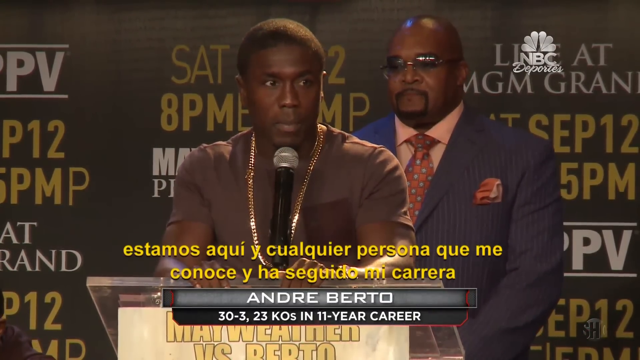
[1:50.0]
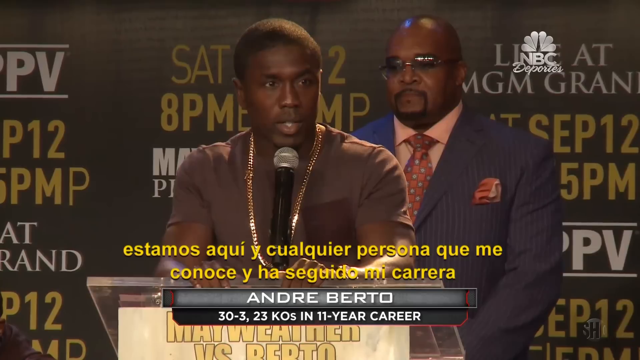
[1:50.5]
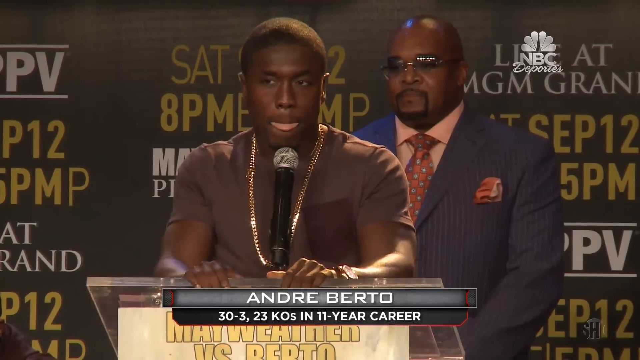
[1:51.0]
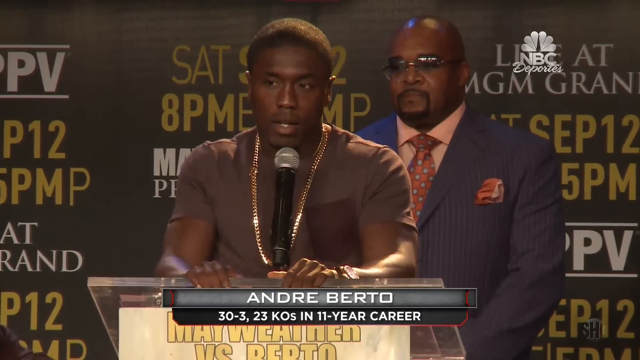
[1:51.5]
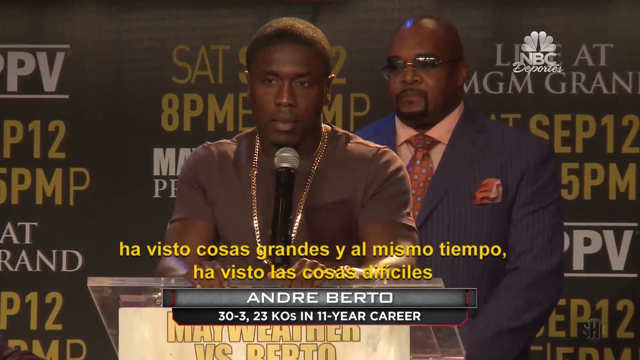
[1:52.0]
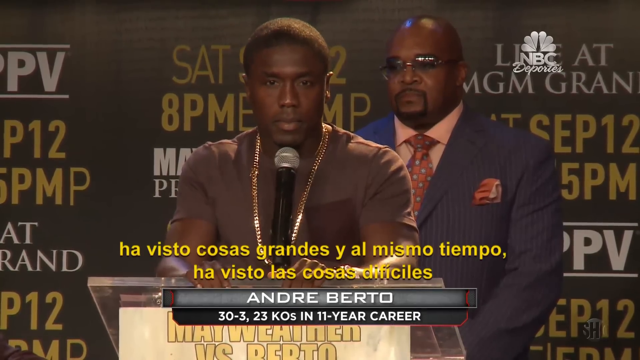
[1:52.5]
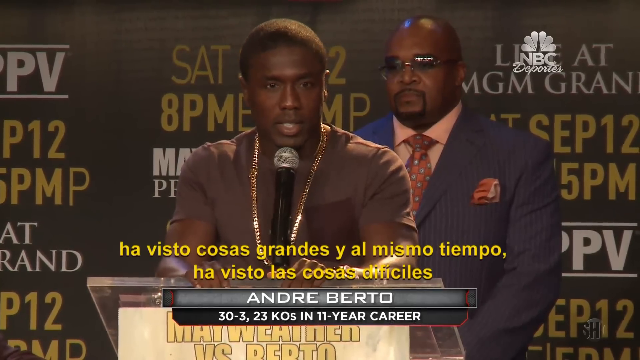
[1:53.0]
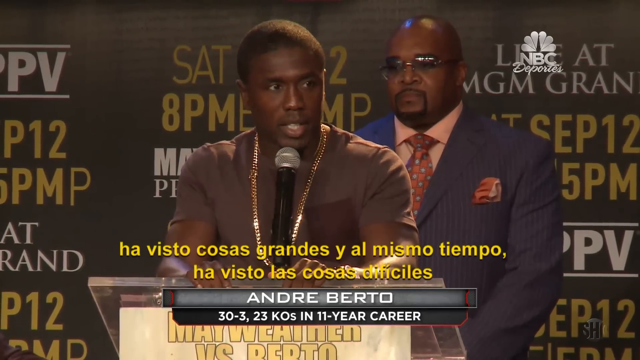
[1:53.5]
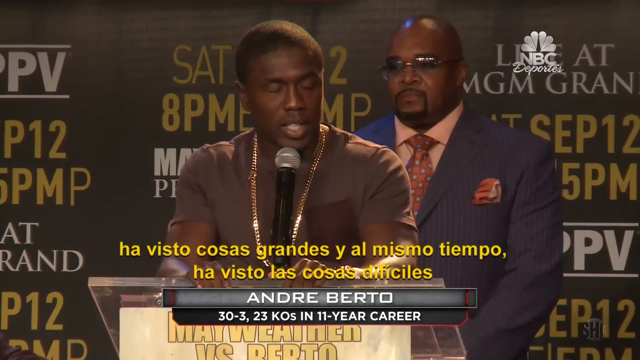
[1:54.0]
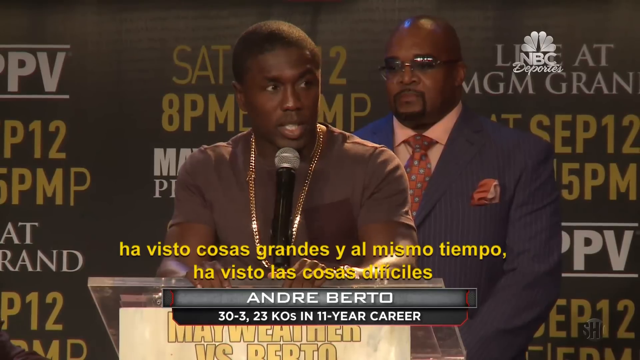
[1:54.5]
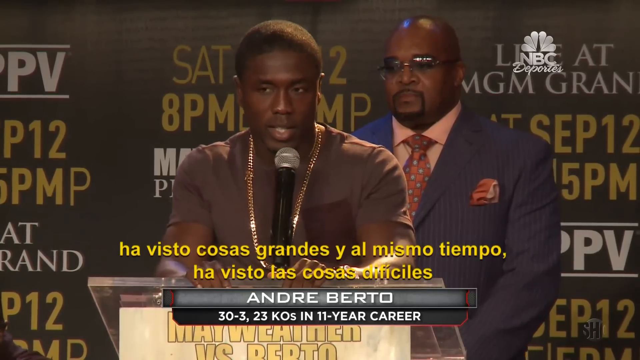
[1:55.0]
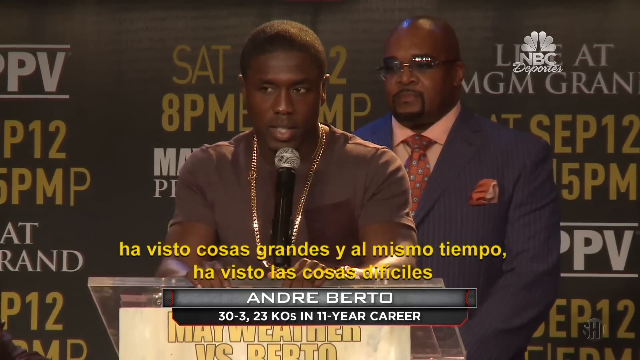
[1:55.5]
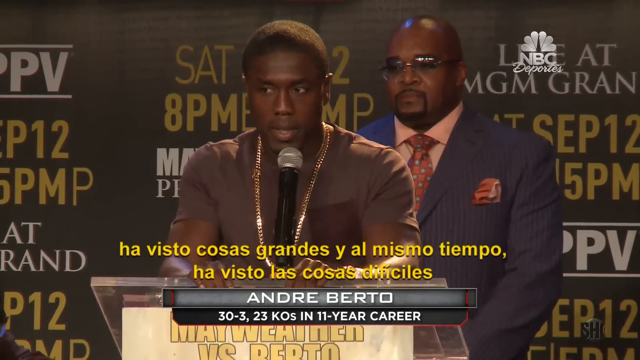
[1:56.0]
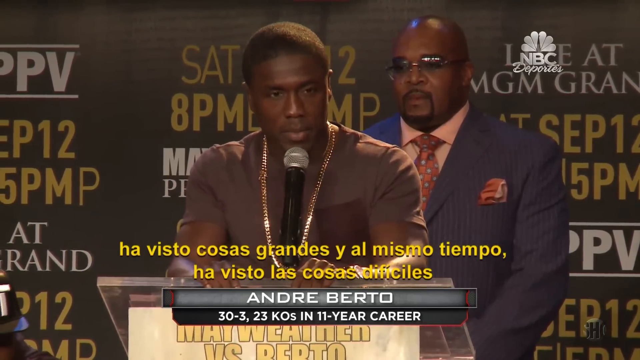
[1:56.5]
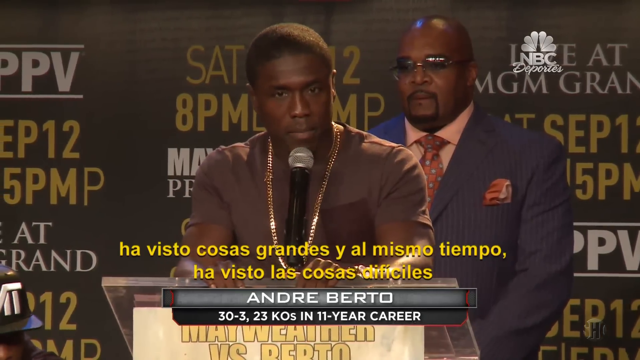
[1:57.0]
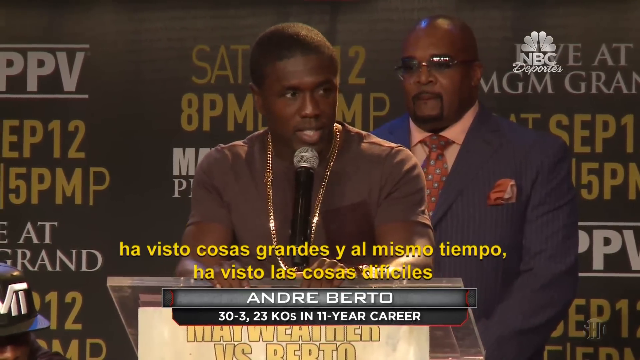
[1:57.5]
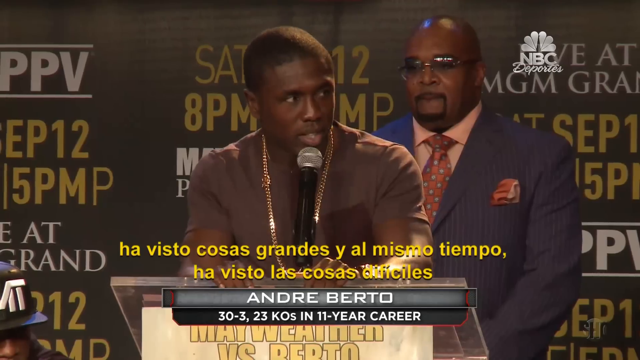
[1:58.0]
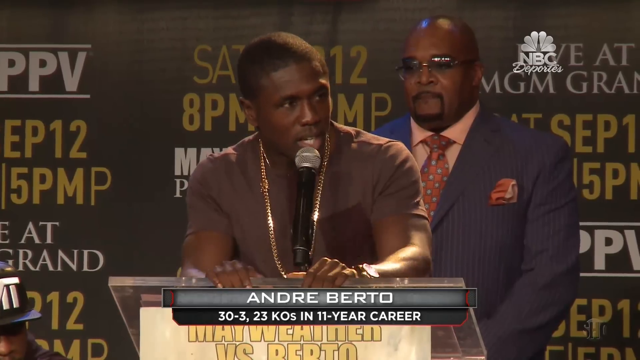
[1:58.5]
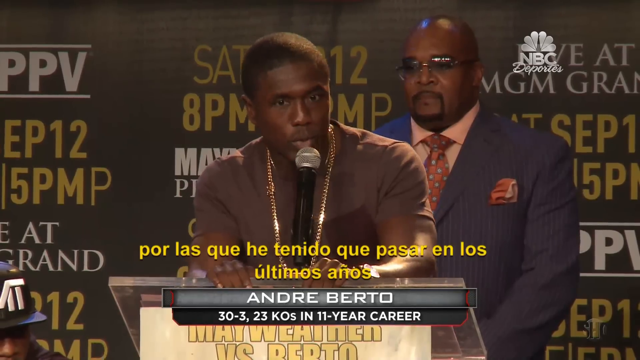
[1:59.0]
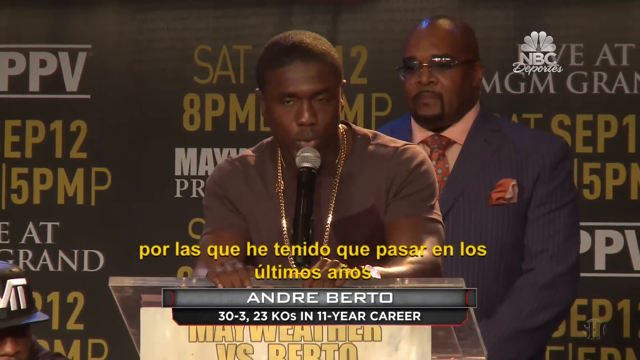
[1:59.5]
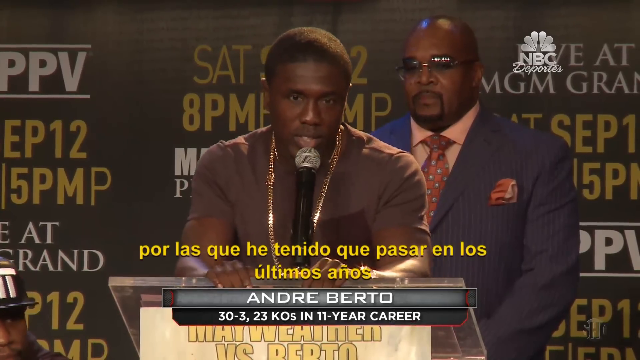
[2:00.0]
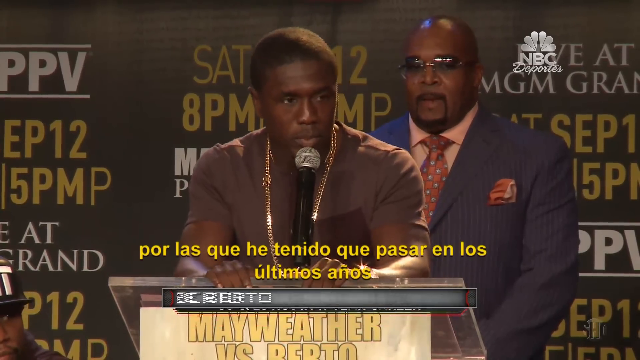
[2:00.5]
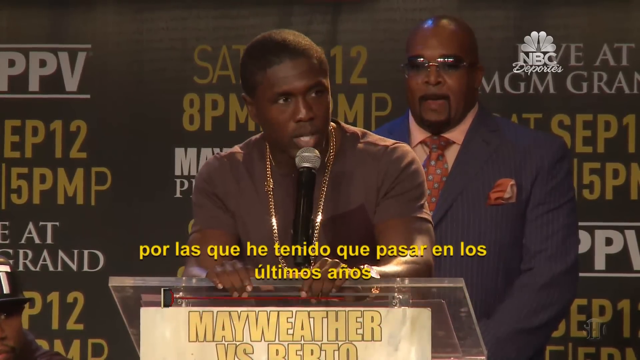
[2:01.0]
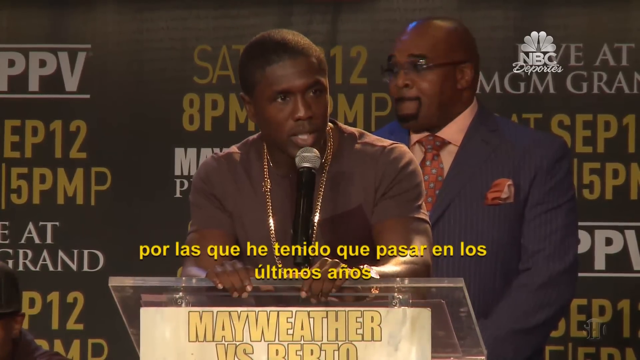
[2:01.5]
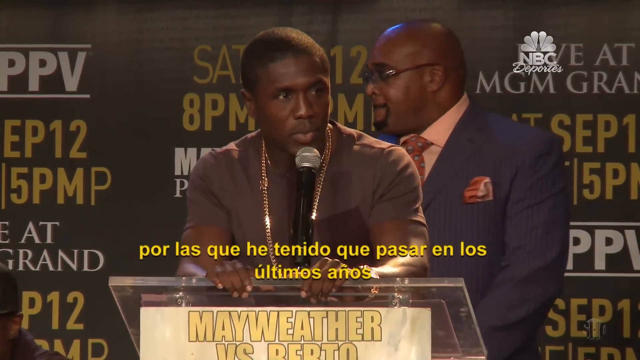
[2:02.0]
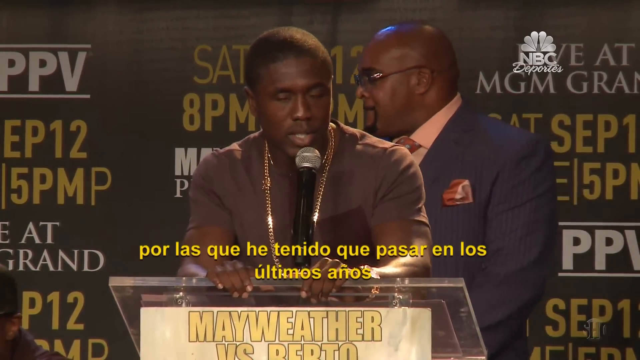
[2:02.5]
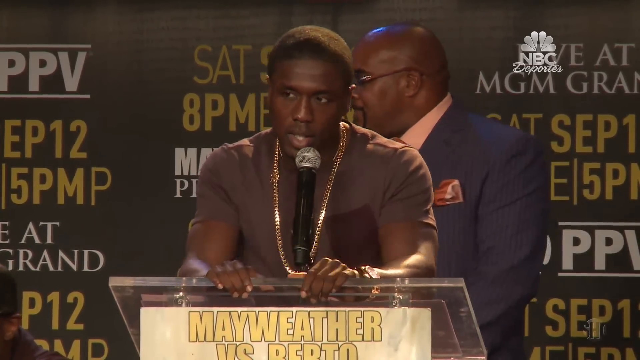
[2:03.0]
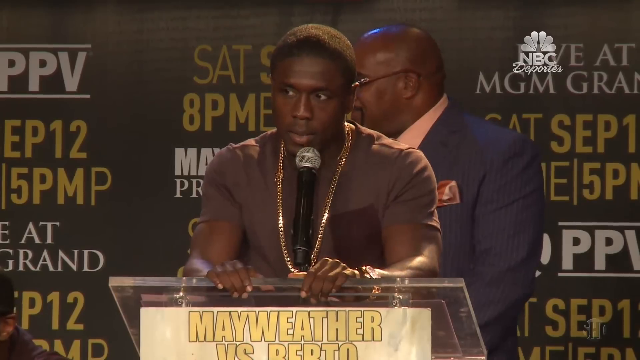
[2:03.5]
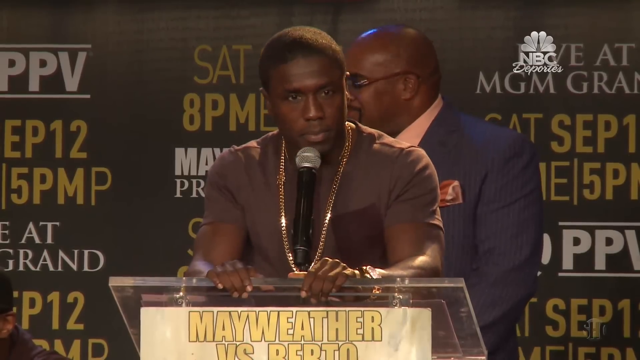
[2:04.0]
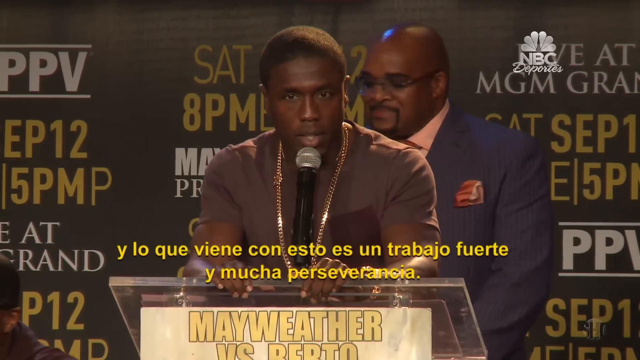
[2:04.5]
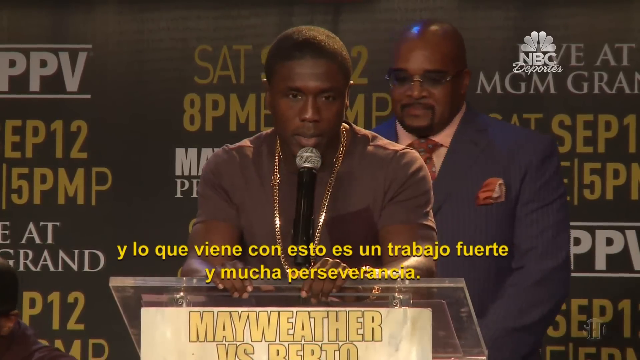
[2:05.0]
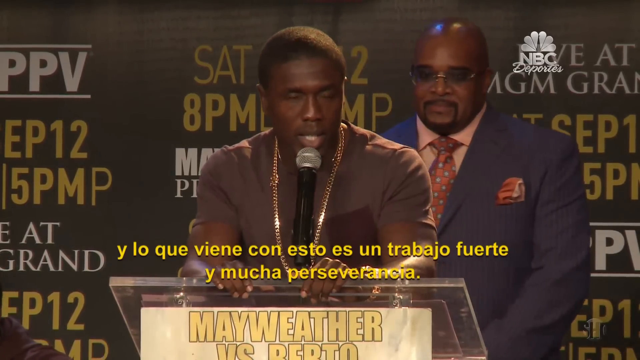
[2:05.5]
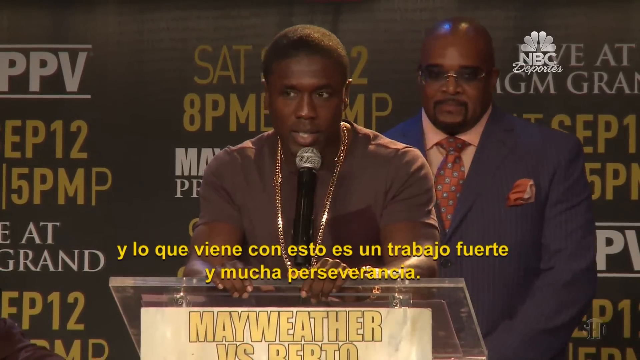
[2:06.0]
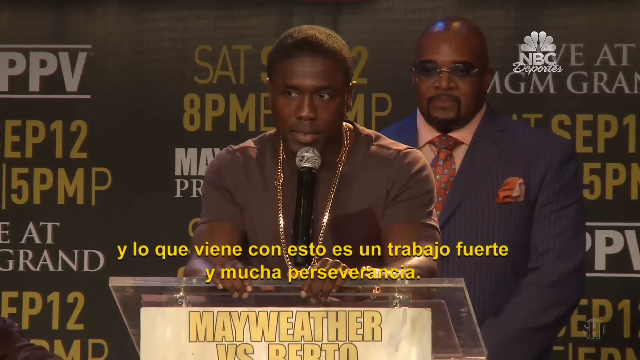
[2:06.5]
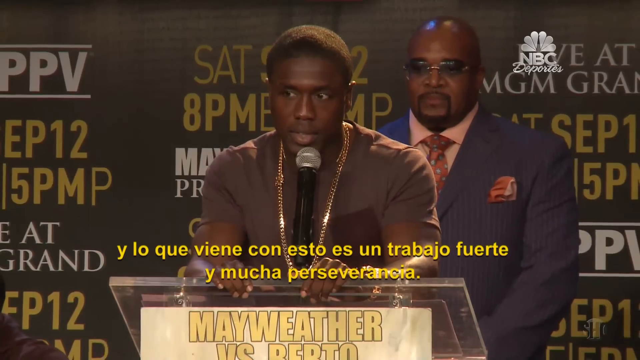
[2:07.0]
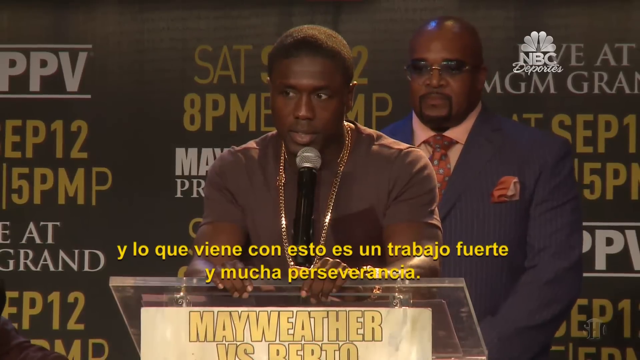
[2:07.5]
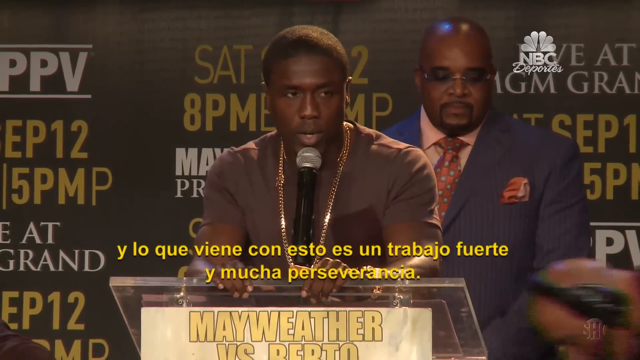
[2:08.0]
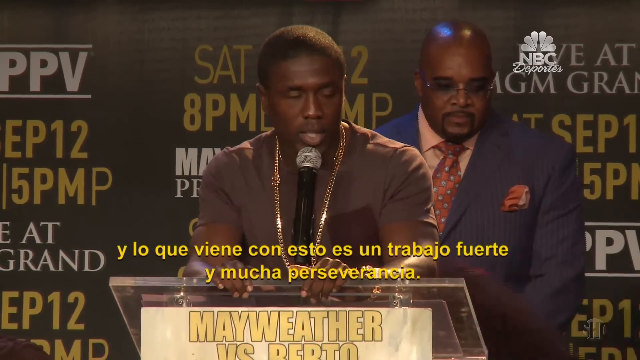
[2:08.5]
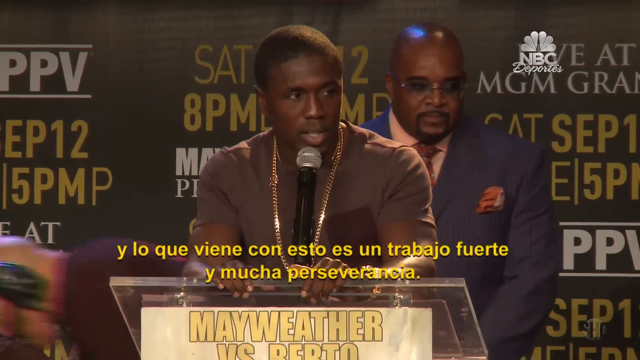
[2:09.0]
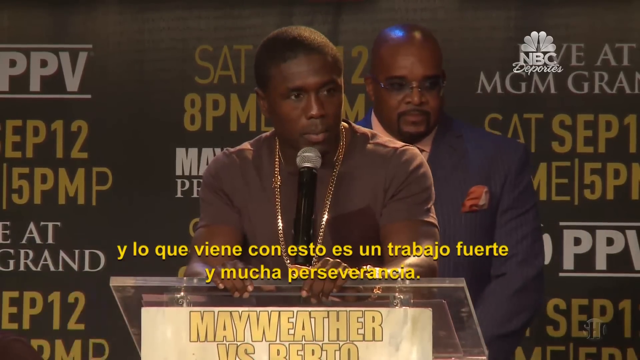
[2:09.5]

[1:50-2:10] A man speaks into a microphone that is part of a podium, with his left and right hands on the front of the podium. His body faces the camera while his head and eyes are slightly turned to his left. He wears a gold chain. At one point, a person slouched down walks from left to right behind the podium. A man stands behind the speaker; only his upper part is visible. He wears a suit and tie and glasses, and has a handkerchief in his jacket pocket that looks pink.